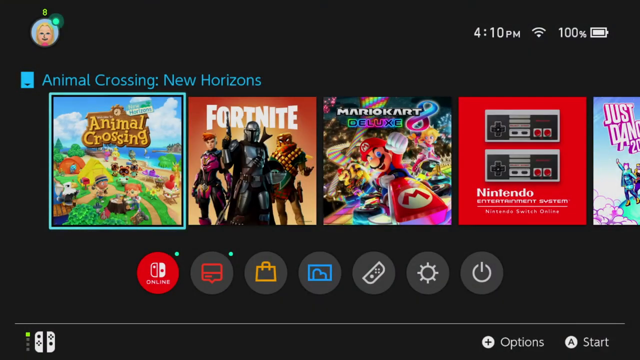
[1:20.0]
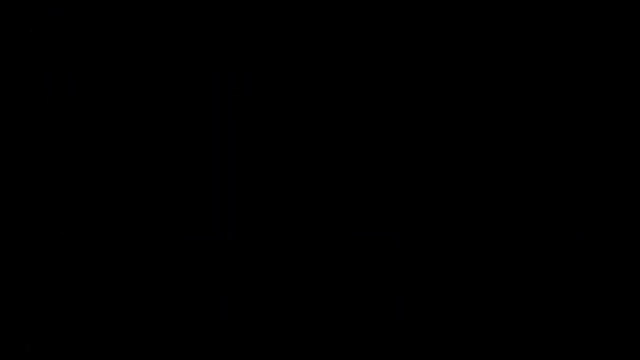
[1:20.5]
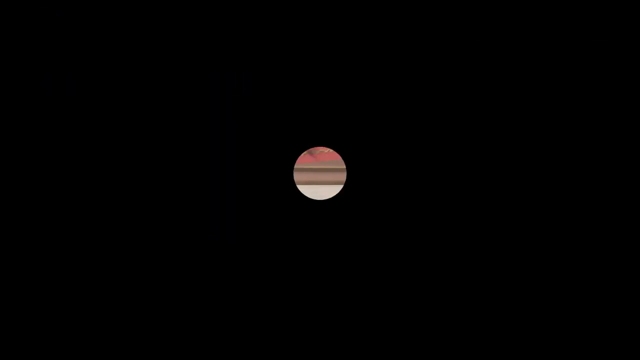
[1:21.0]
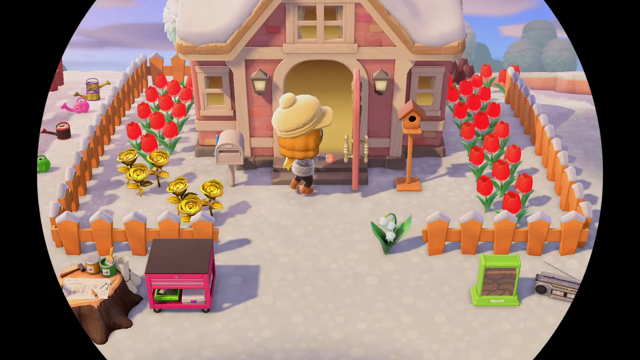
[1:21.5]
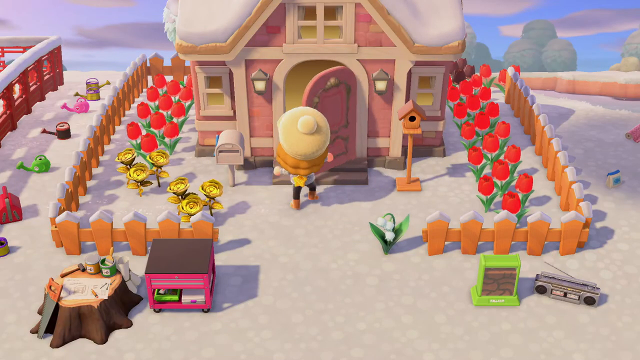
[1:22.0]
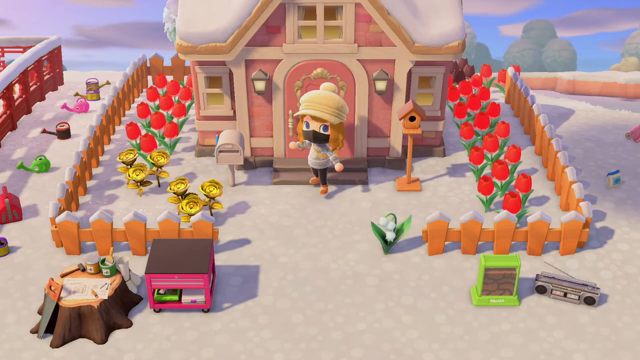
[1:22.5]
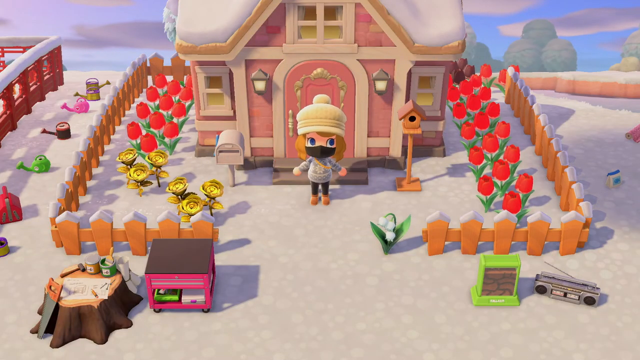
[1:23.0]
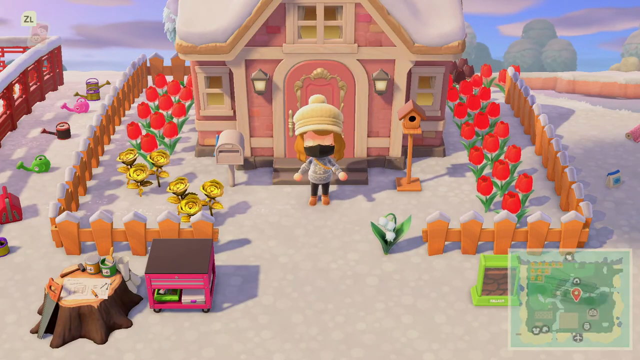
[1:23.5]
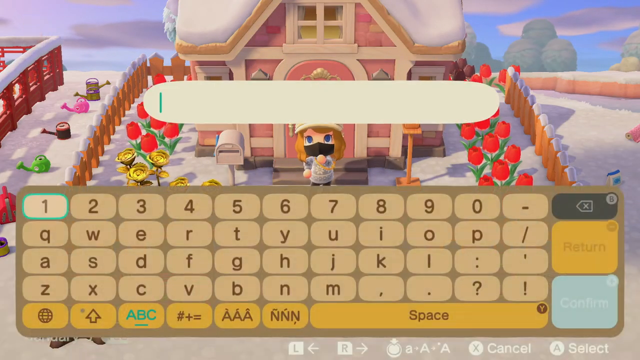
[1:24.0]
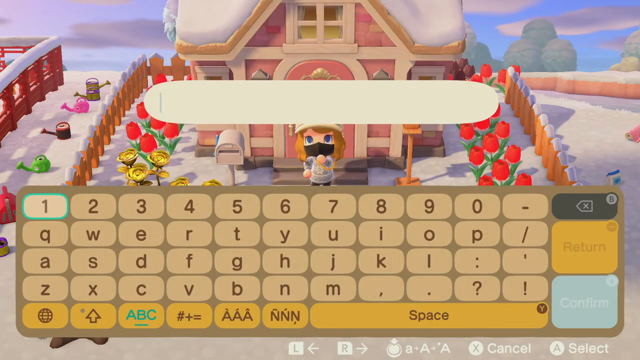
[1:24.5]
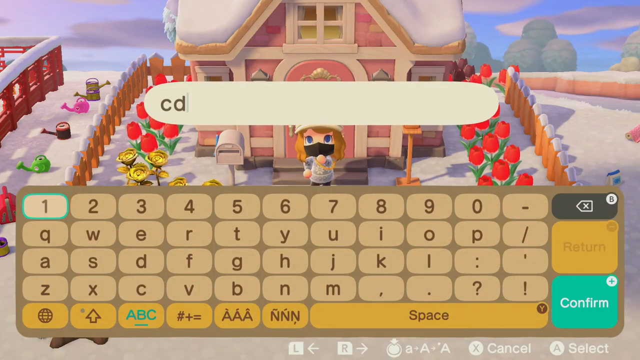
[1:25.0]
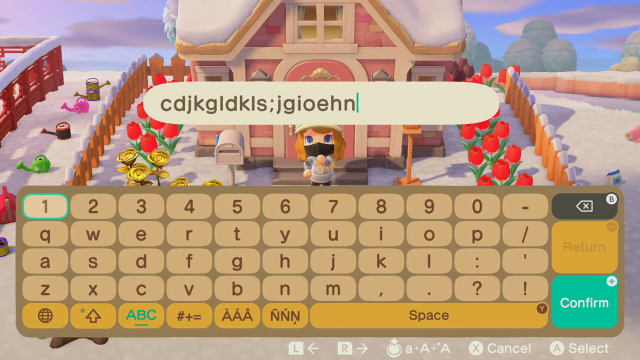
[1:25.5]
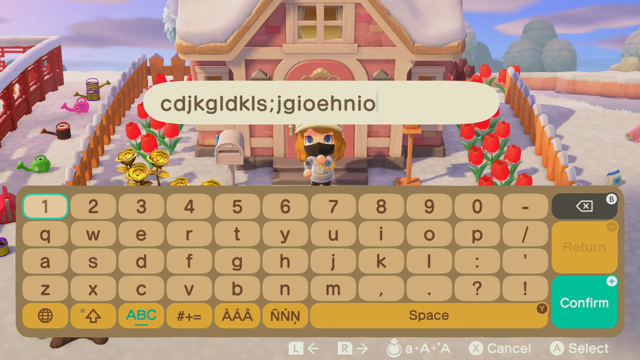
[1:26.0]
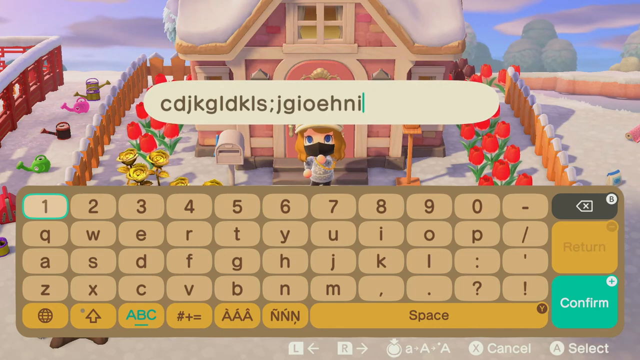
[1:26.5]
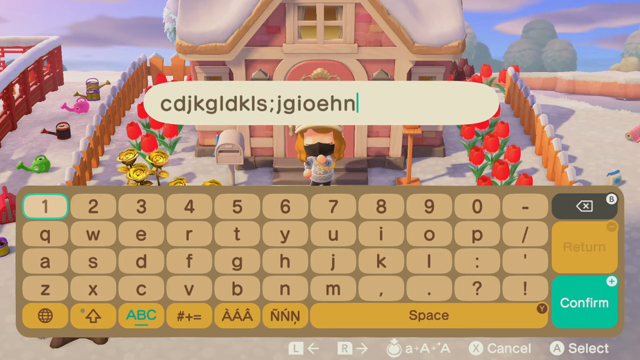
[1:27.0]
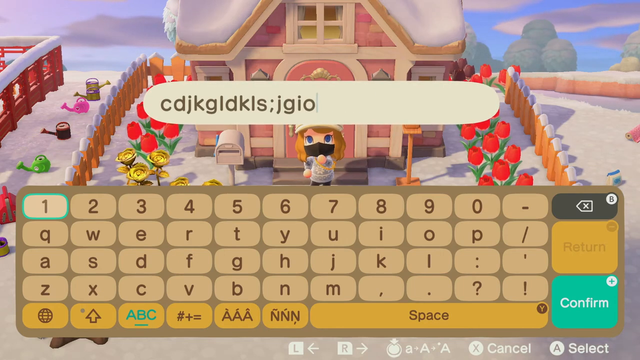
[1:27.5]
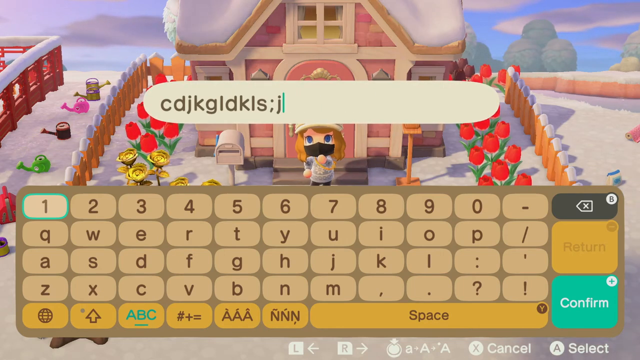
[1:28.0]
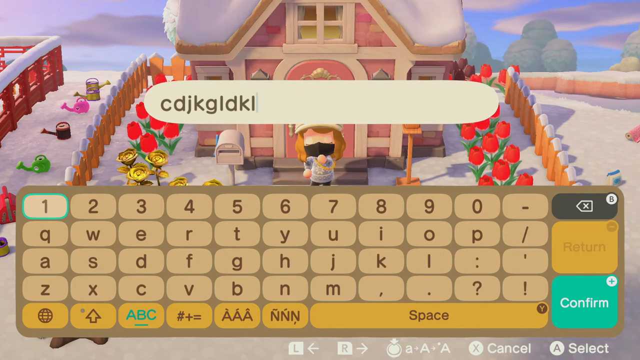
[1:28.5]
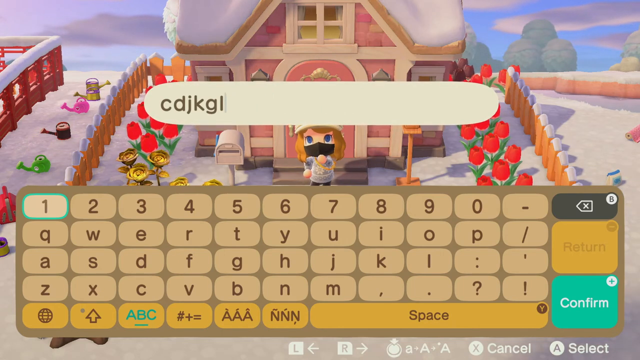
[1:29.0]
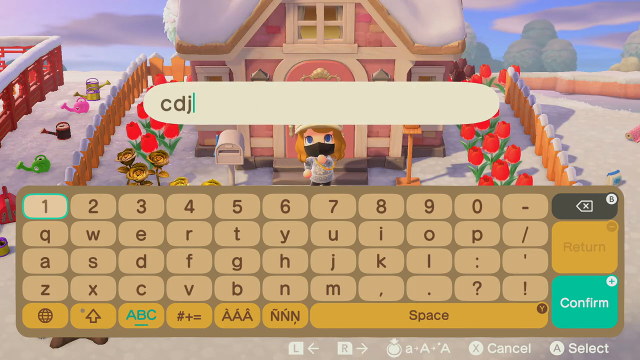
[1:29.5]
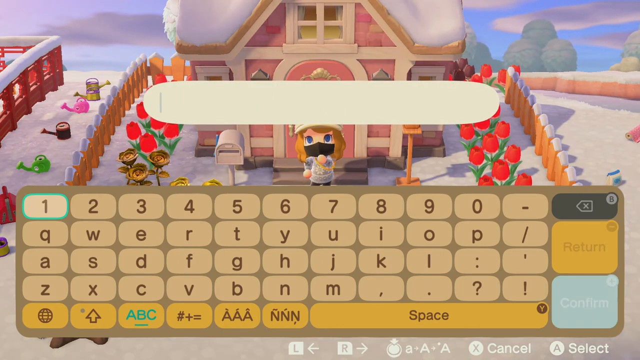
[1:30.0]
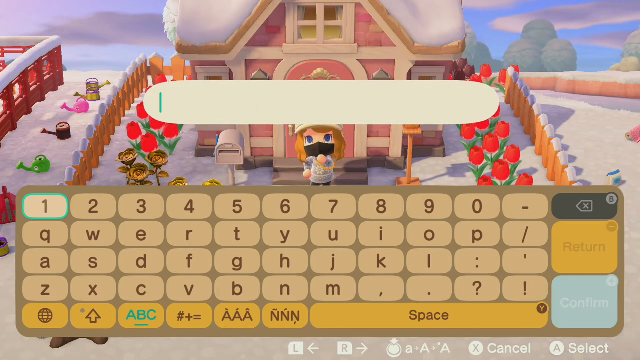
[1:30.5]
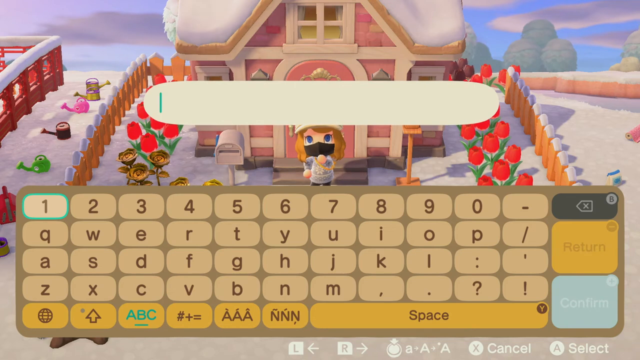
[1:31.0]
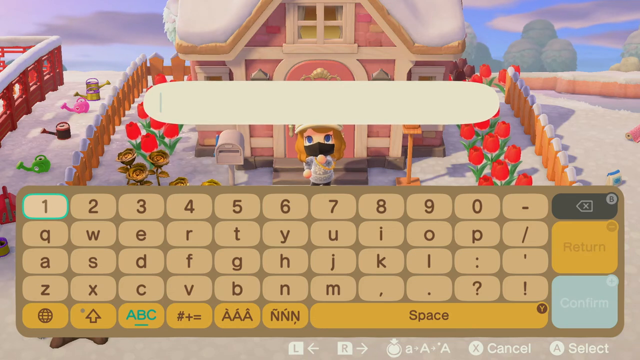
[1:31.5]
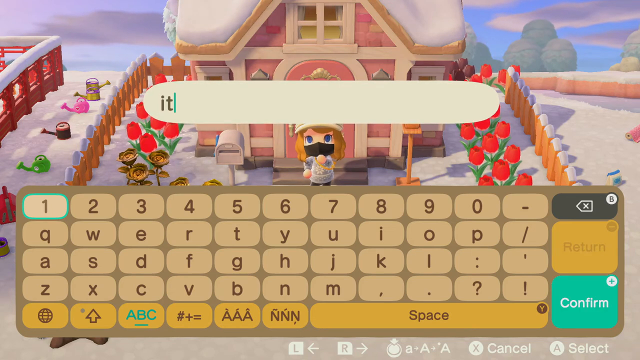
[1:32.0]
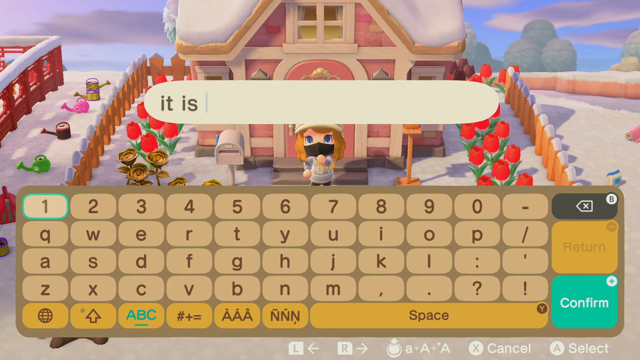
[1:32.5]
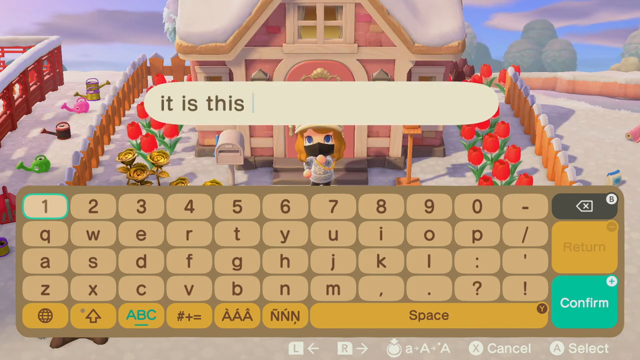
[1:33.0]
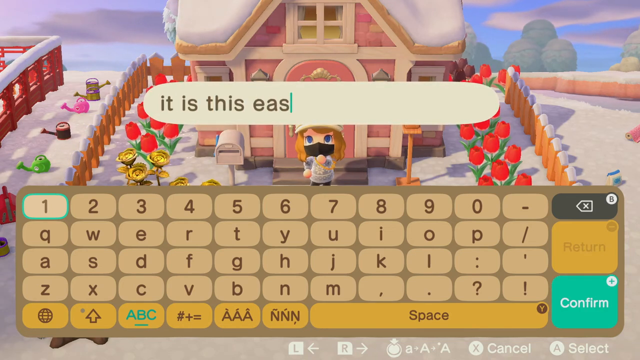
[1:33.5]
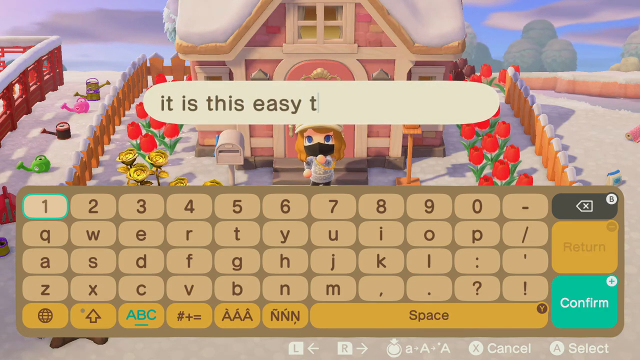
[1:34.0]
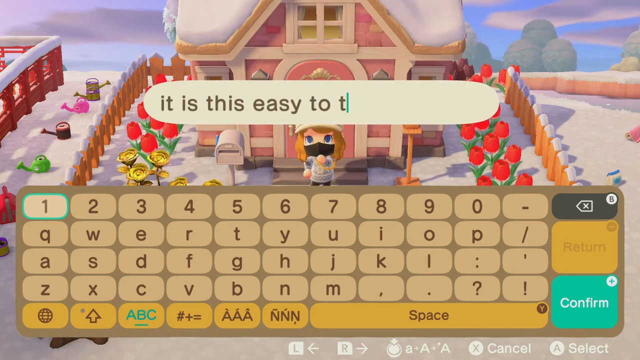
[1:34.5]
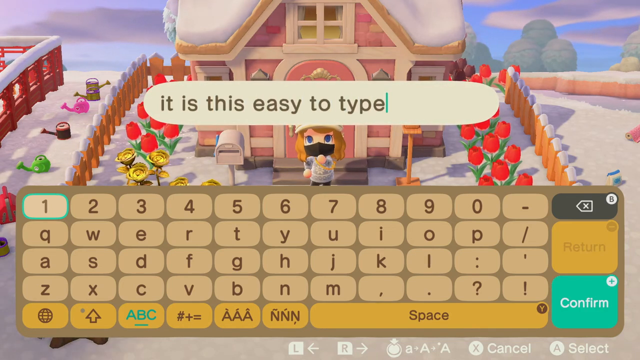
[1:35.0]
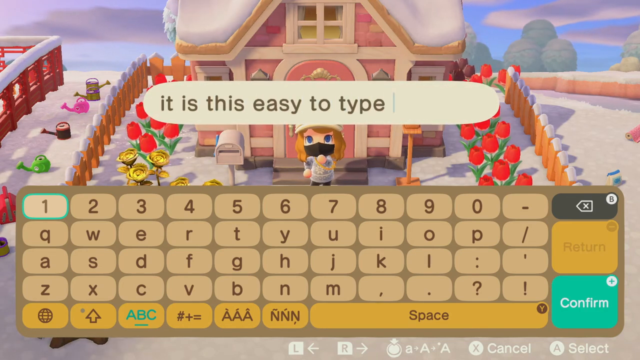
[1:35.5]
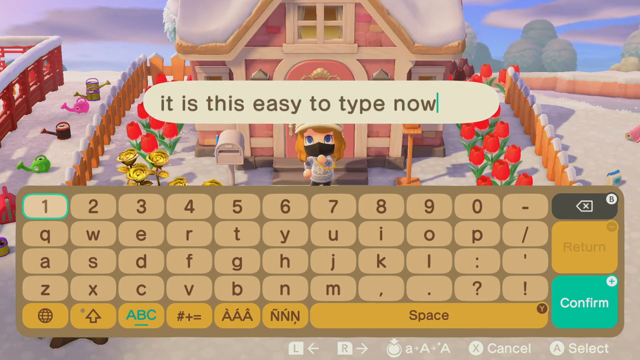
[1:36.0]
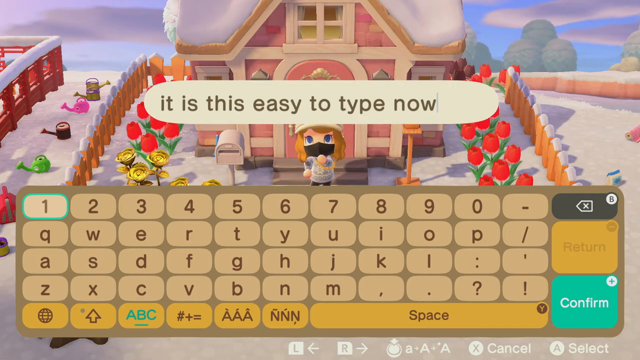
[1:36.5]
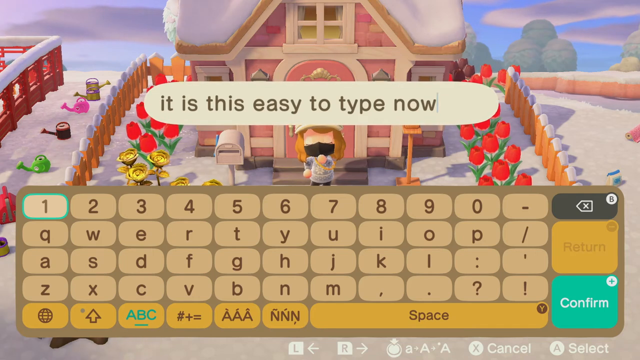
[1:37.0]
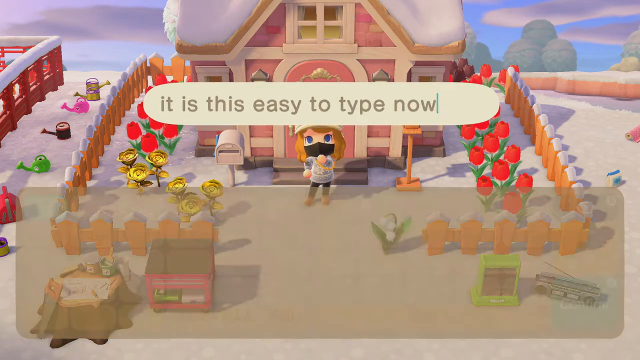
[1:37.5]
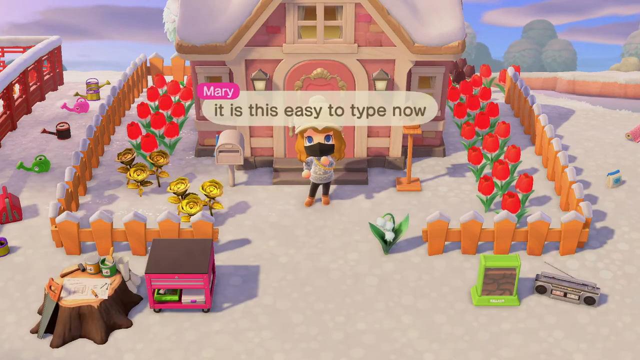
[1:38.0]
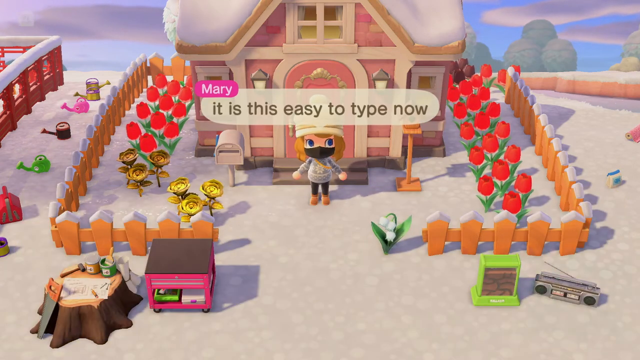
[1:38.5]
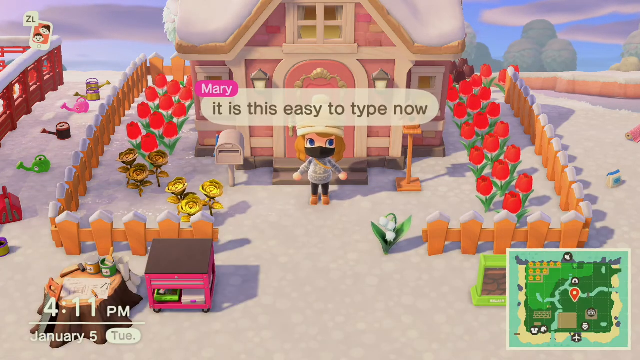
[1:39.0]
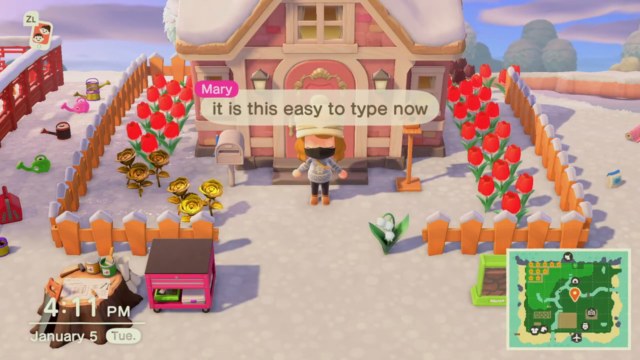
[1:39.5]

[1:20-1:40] A screen shows different video games to pick from, including Animal Crossing, Fortnite and three others. The person clicks on Animal Crossing and the game opens. A little person comes out of a house that looks like a gingerbread house. Someone types in words, and a pop-up says "it is this easy to type now." Mary, the character chosen during the setup, answers back in a white horizontal bubble. The house is surrounded by a fence and flowers, and there appears to be snow on the roof. Watering cans and all kinds of ornamentation are around the house. A keyboard at the bottom of the screen is used to type into the white bubble. The character appears to have a black mask on her face.